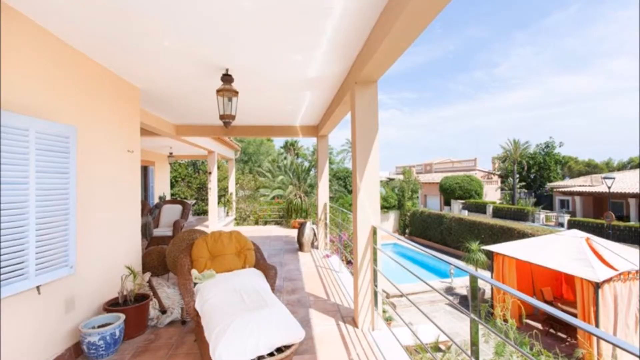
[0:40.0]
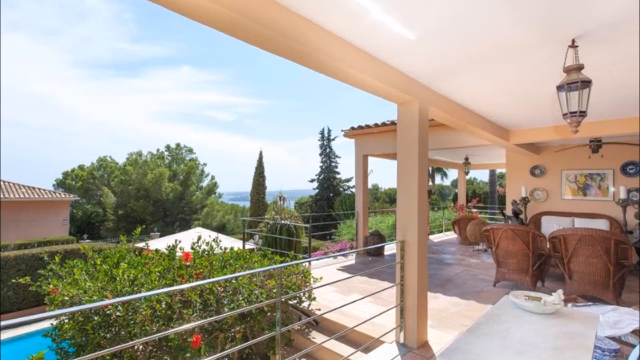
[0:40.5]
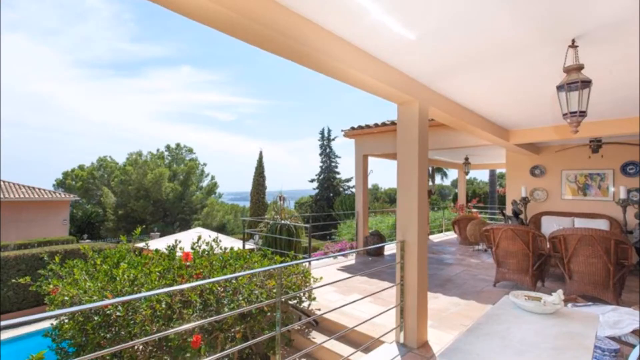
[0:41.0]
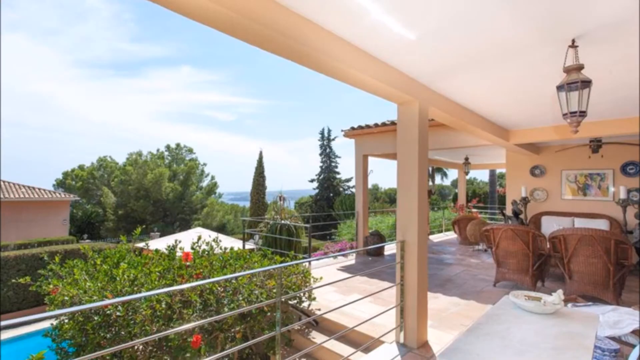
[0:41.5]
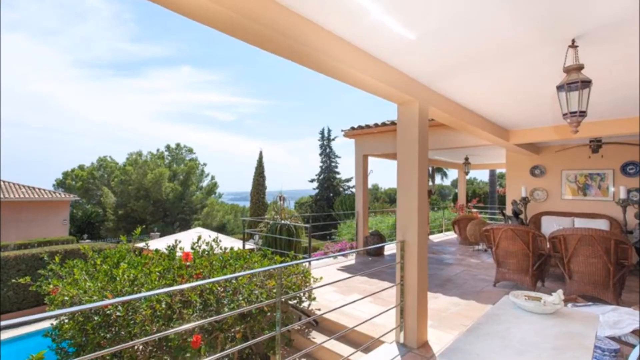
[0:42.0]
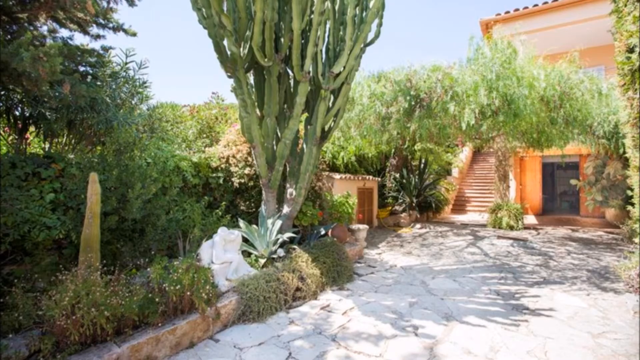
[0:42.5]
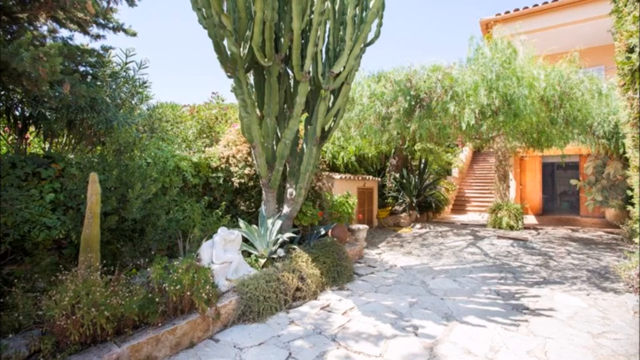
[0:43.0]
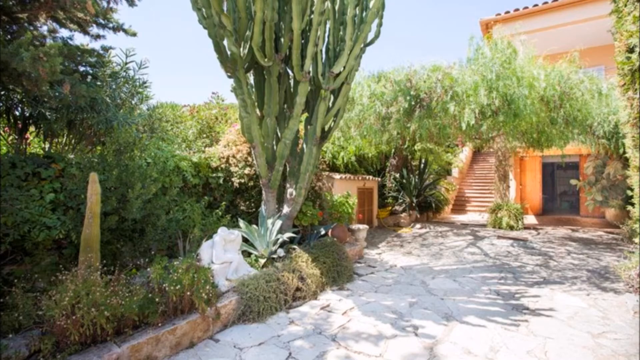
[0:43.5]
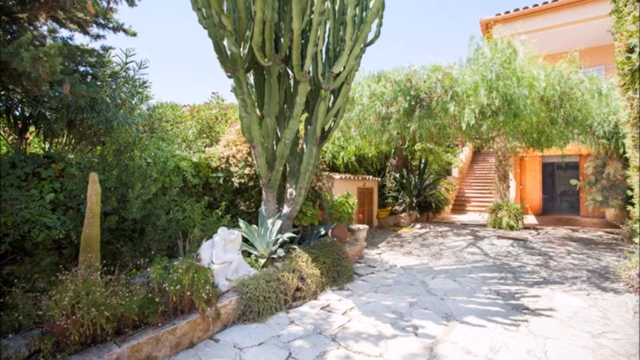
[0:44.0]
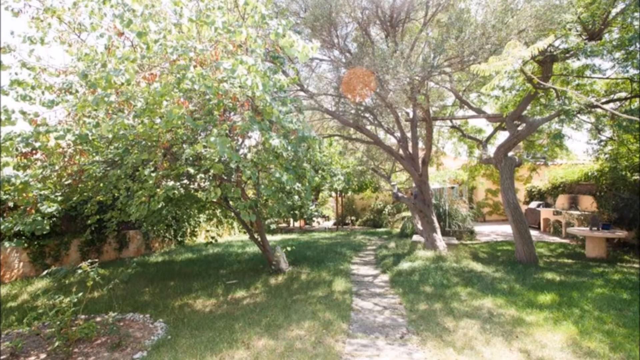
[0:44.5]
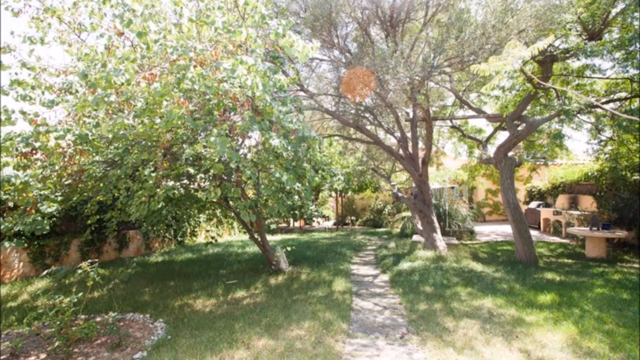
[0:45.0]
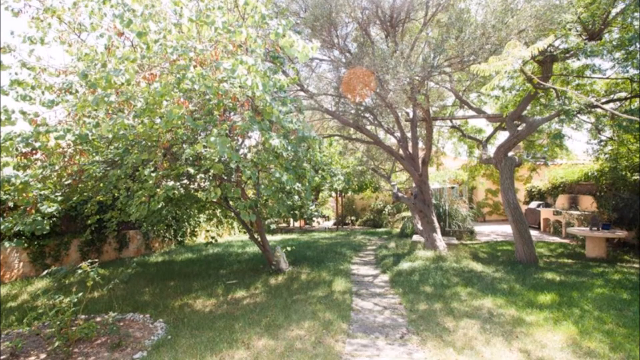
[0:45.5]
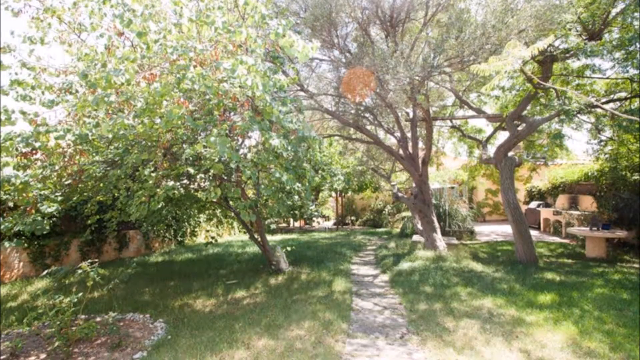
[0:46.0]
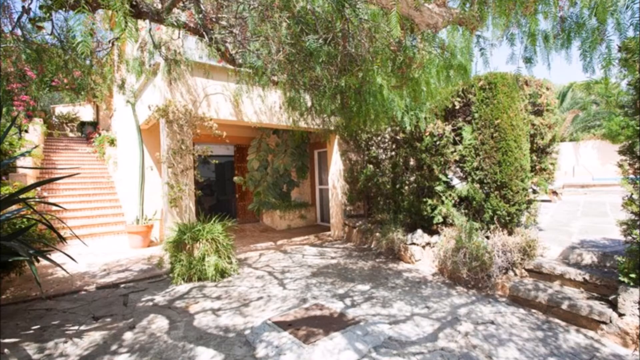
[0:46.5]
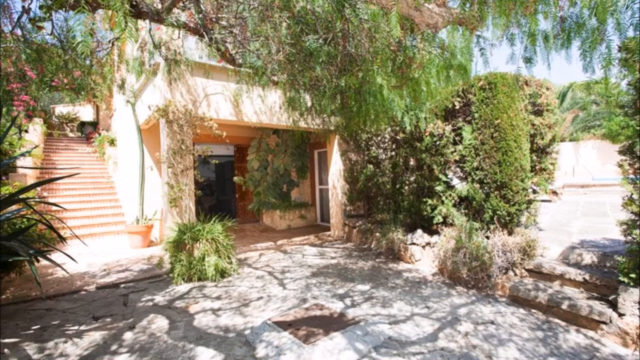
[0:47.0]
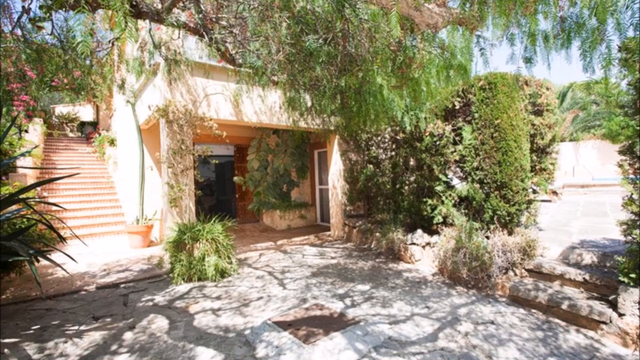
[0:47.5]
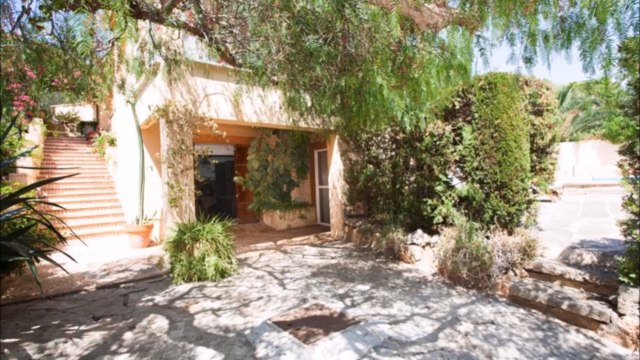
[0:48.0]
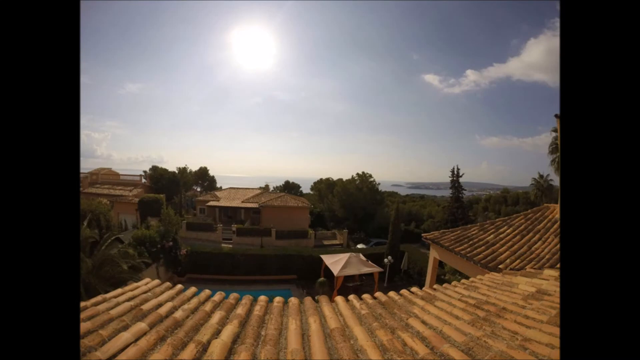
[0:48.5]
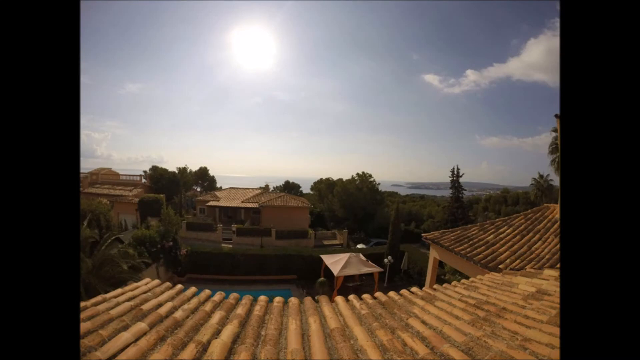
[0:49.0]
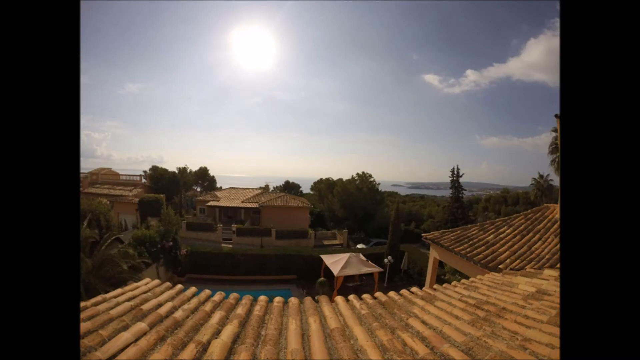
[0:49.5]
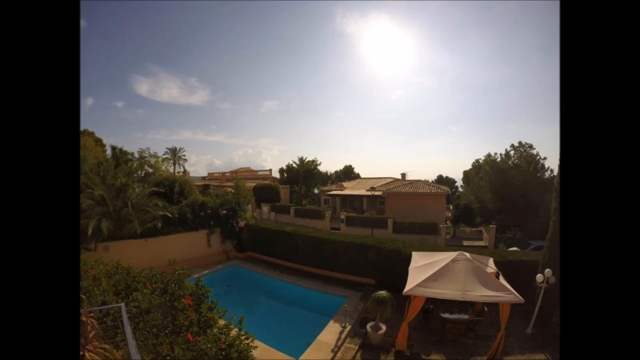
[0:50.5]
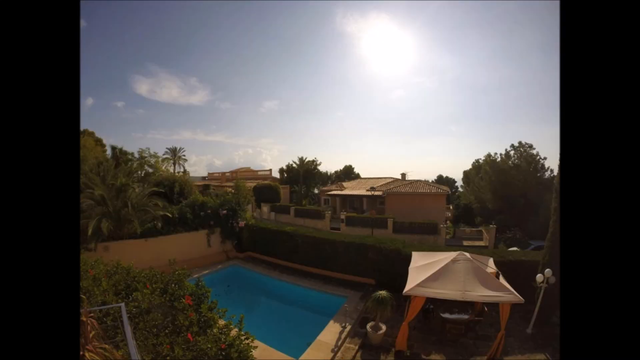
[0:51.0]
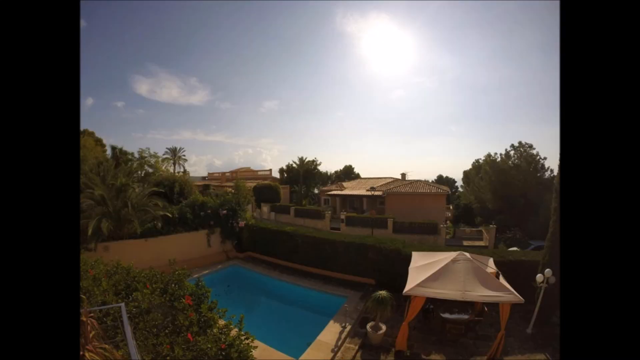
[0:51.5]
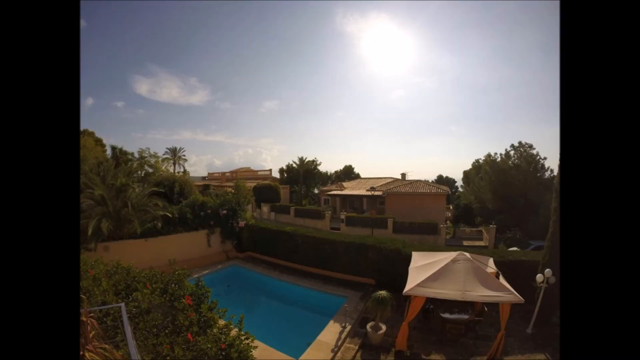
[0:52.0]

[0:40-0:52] The scene changes to an outdoor view of what looks like a patio, with trees and a blue sky in the distance. Another outdoor view looks like the outside of the house: to the right side are some stairs, a door is on the far right side off in the distance, and many trees and bushes are to the left side. What looks like the backyard follows, with grass on the left and right sides of the ground and many very big trees up close in the middle; one on the left is really huge. The outside of the house appears next, with stairs to the left and an entrance in the middle. A rooftop scene follows, taken from a rooftop, showing what looks like either one big giant home or two separate homes, with a car on the right side and the pool visible. The scene then changes to the pool: the pool is at the bottom, a very large house is off in the distance, and what looks like another house is to the left in the distance. Many trees are to the left and right sides and in the distance. The sky above is very clear with some clouds, and the sun shines very bright in the top right section.